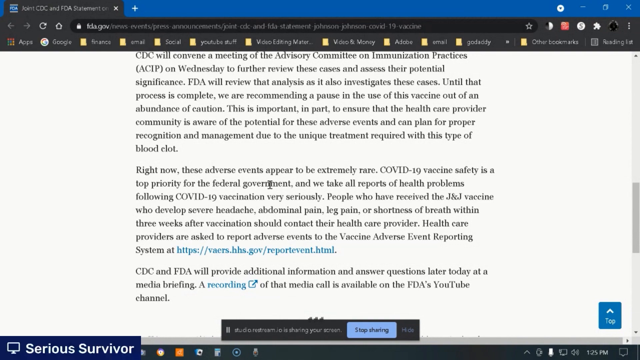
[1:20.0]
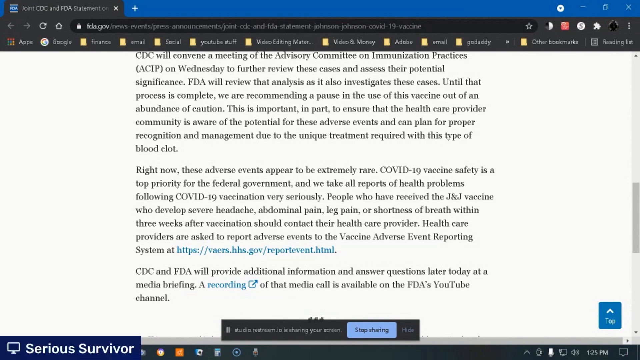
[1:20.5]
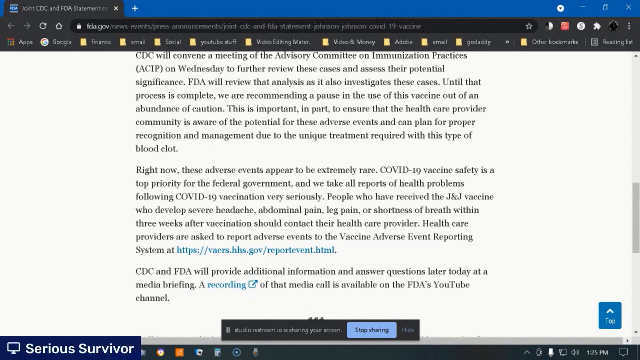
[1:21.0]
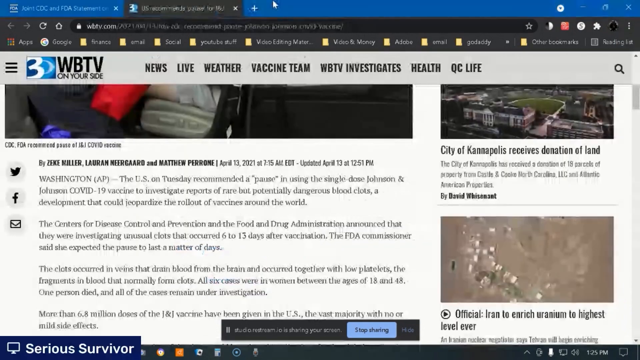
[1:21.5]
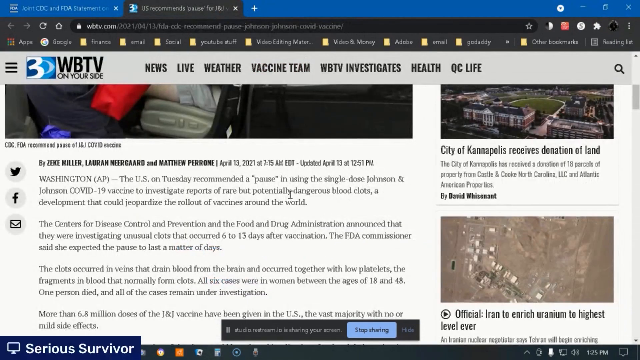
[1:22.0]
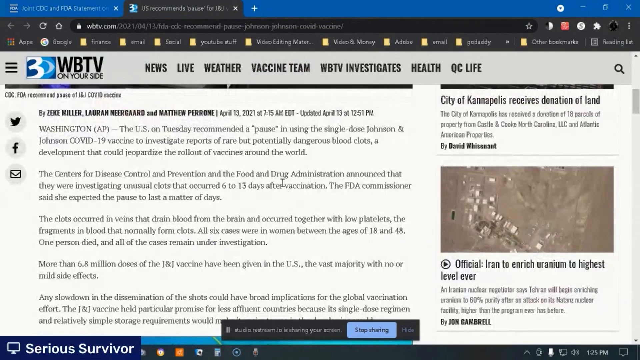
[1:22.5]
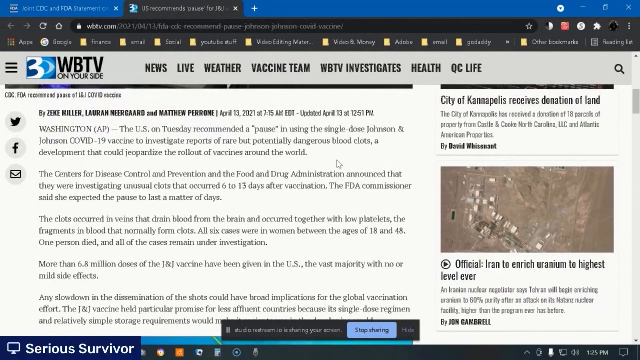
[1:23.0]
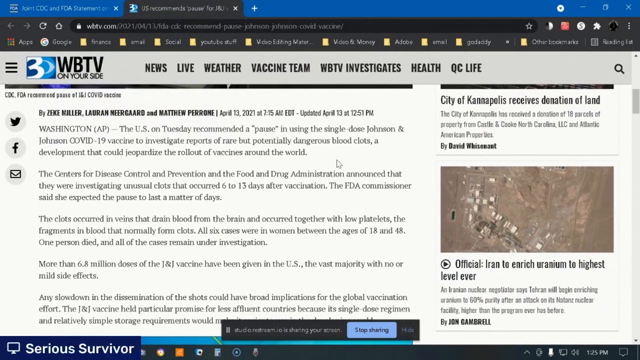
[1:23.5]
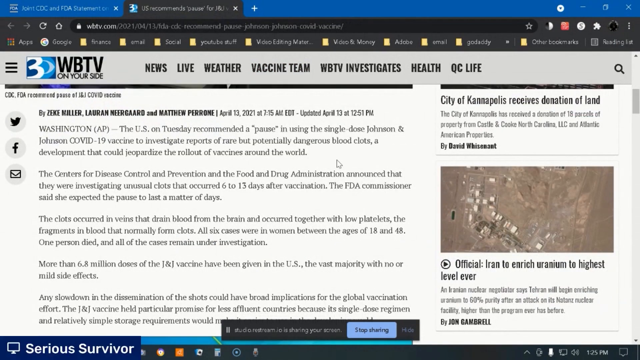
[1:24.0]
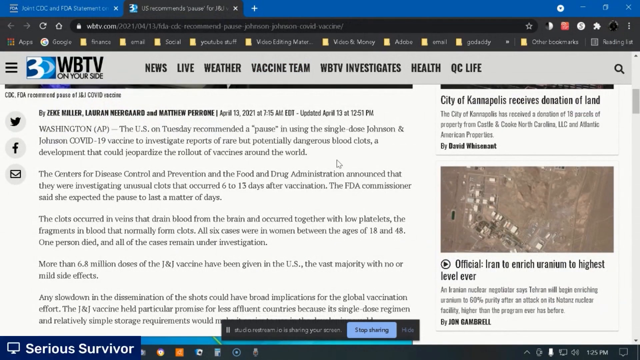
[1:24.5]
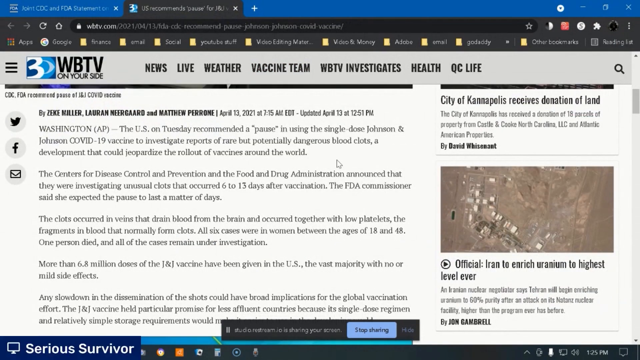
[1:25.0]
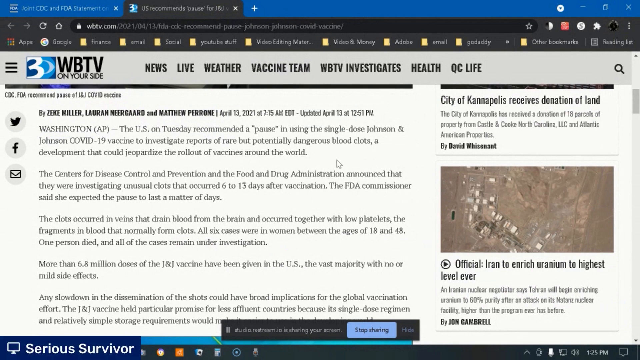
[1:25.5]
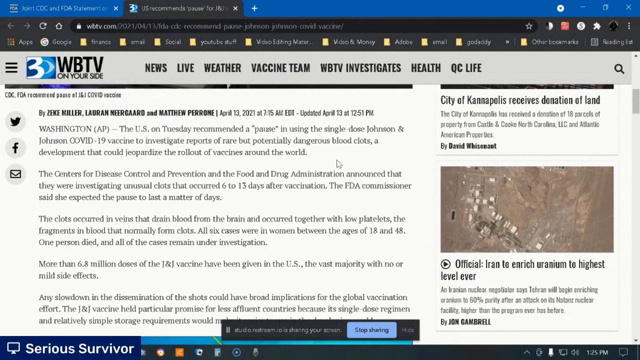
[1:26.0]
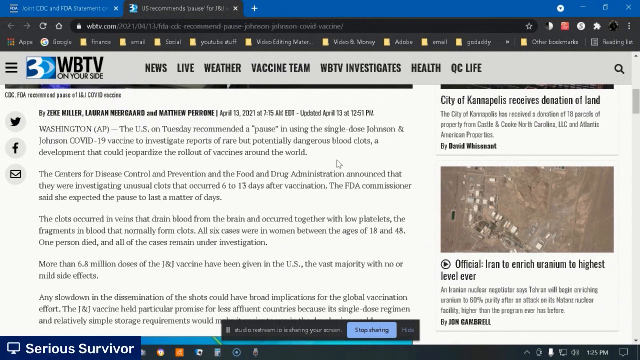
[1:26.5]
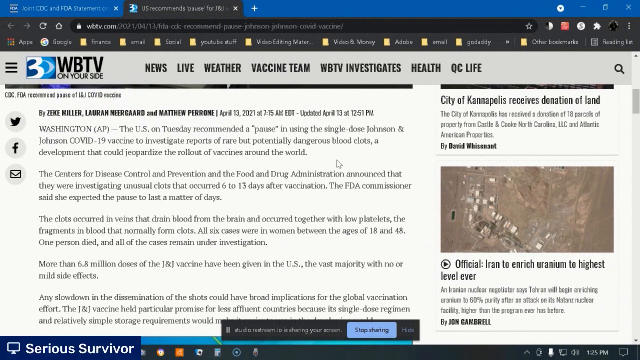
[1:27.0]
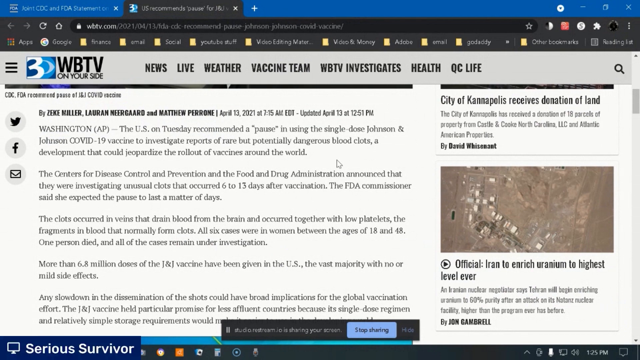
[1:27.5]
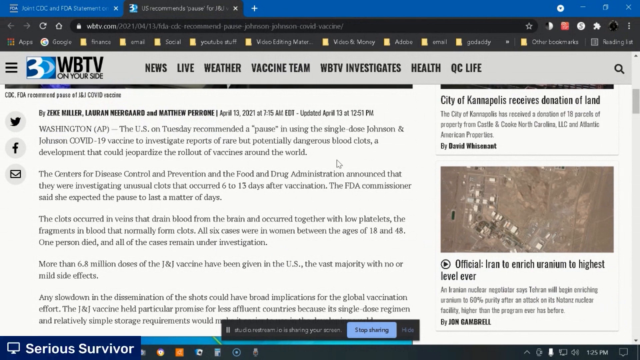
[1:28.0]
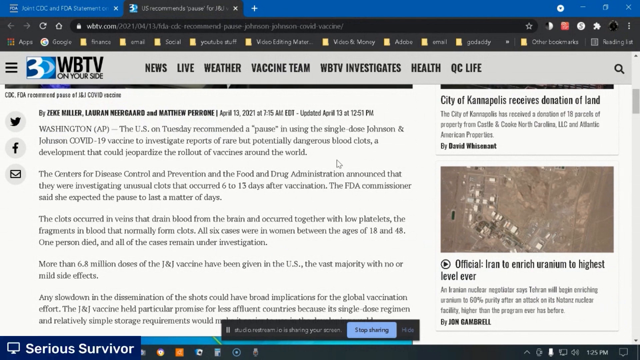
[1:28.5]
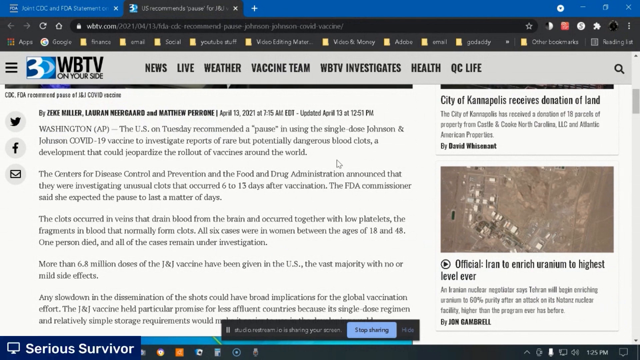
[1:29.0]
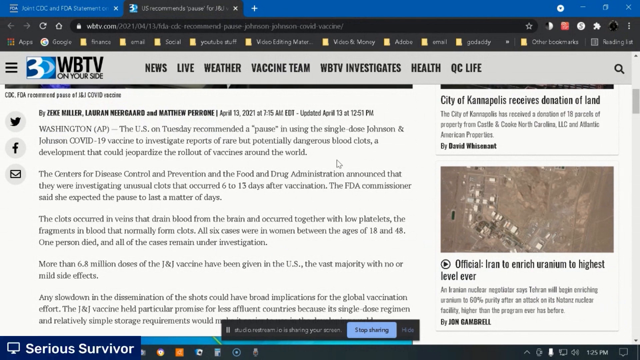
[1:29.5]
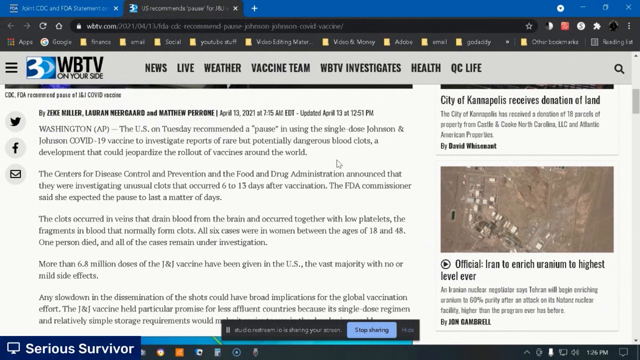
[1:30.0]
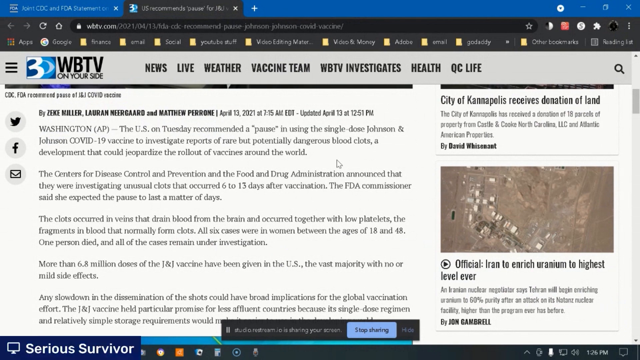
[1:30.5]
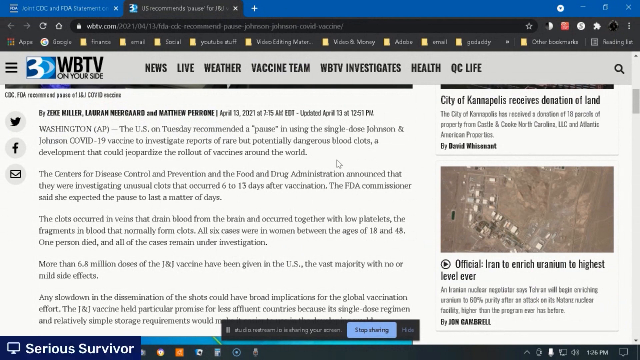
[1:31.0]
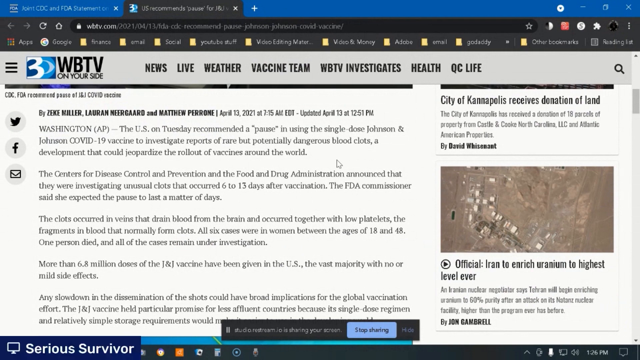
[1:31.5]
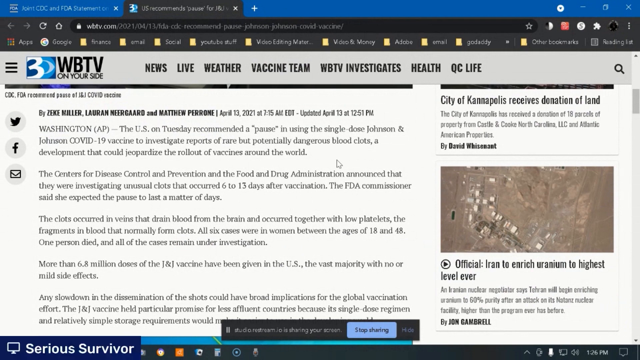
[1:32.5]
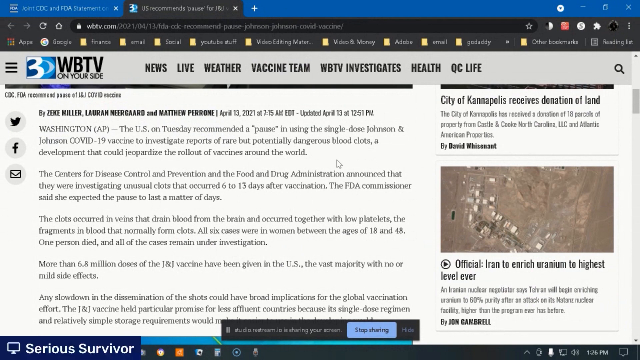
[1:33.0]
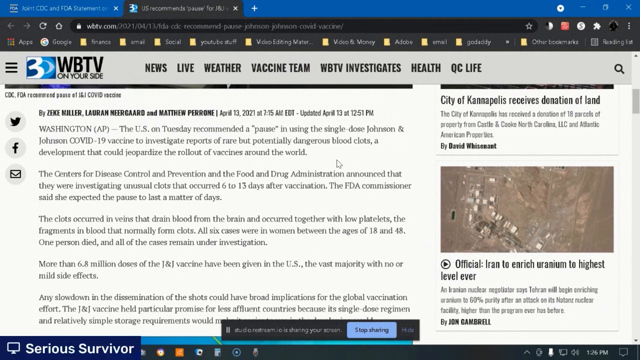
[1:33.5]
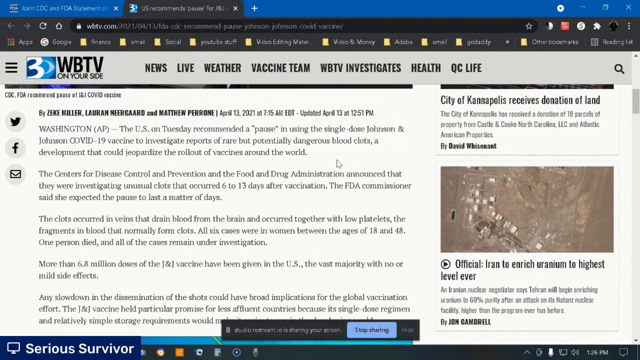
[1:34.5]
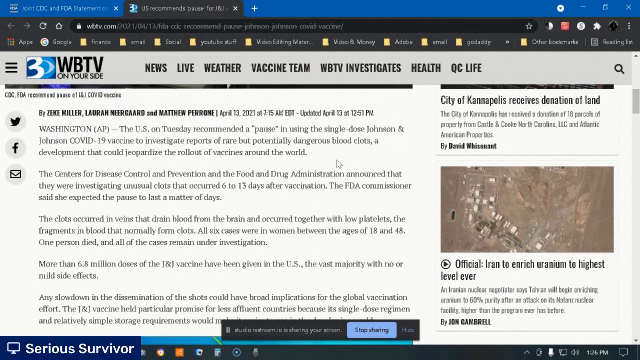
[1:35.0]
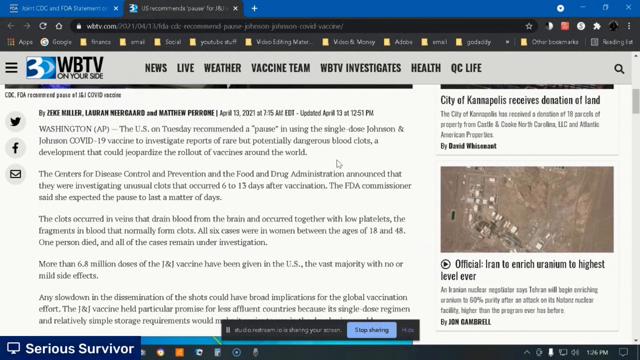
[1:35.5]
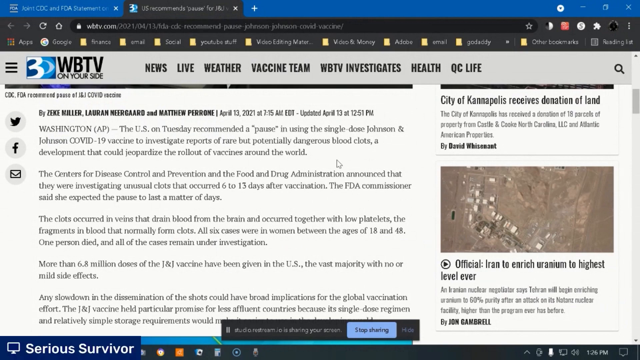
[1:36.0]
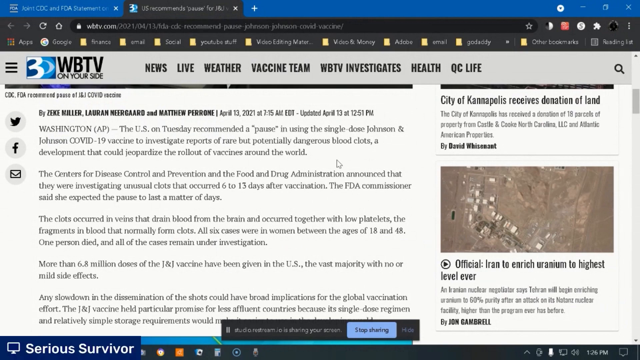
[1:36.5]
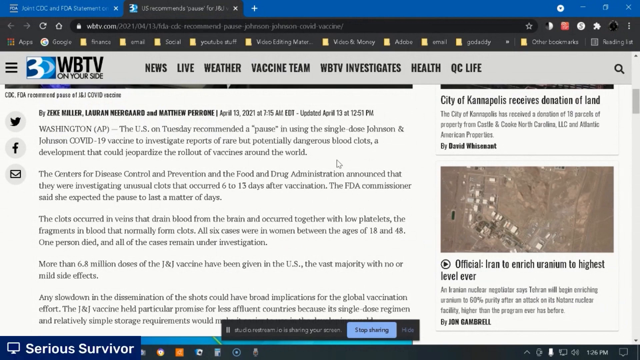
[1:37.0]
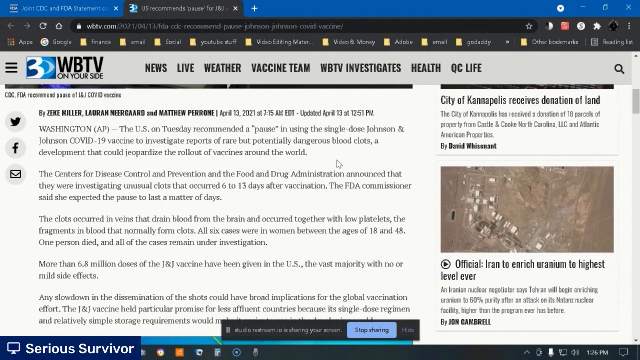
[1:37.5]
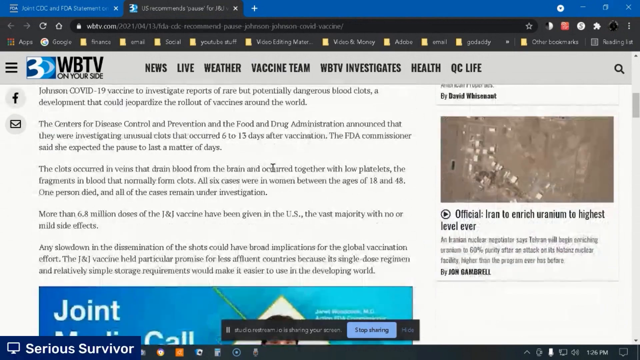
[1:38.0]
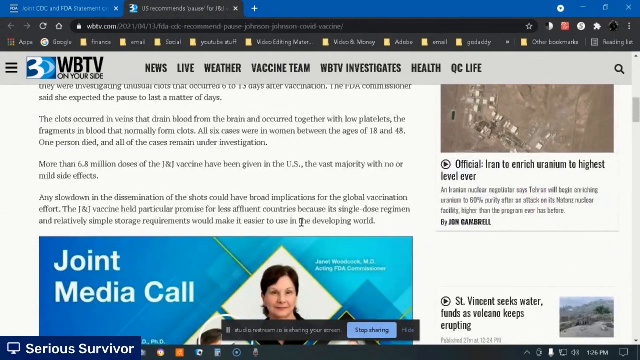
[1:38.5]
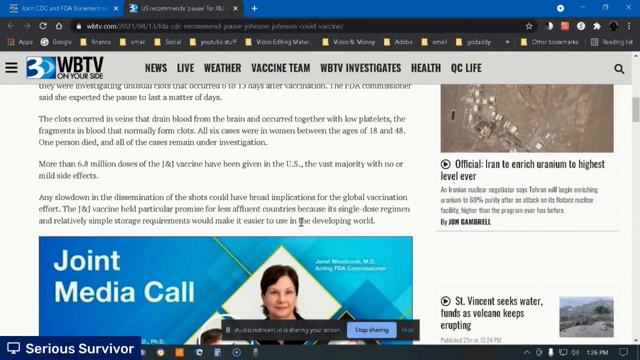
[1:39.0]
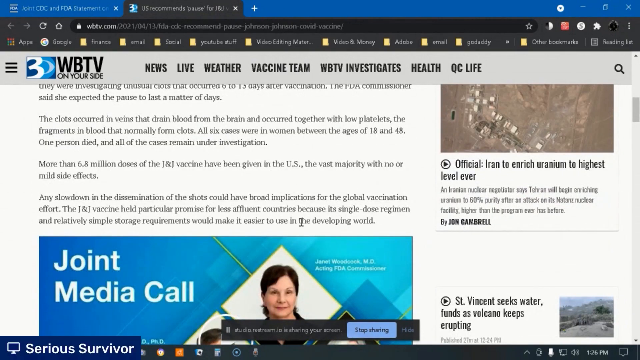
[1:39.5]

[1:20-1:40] The view is down toward the bottom of the same article. The man then scrolls to a WBTV "On Your Side" page with text about recommending a pause in using the single-dose Johnson and Johnson vaccine and investigating reports of potentially dangerous blood clots. He scrolls through that article, then goes to a different page that possibly supports the first article.